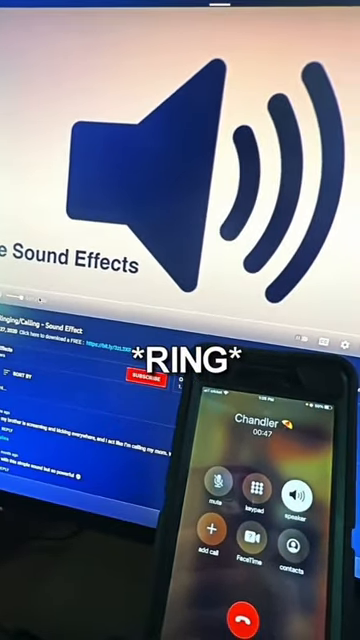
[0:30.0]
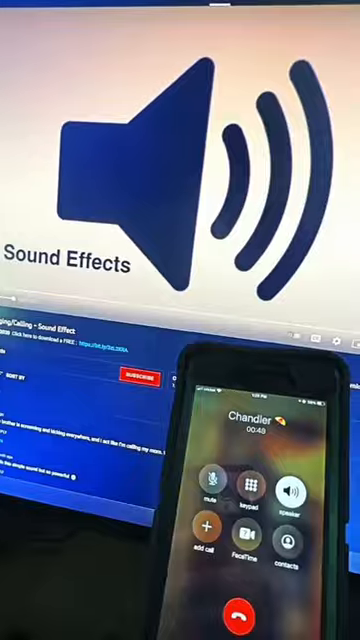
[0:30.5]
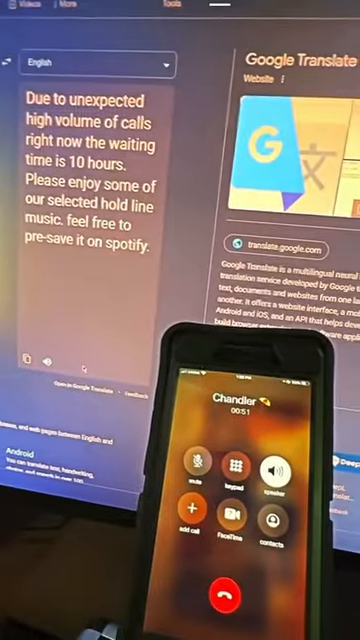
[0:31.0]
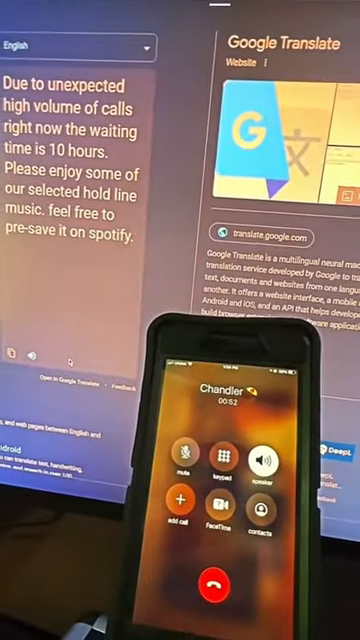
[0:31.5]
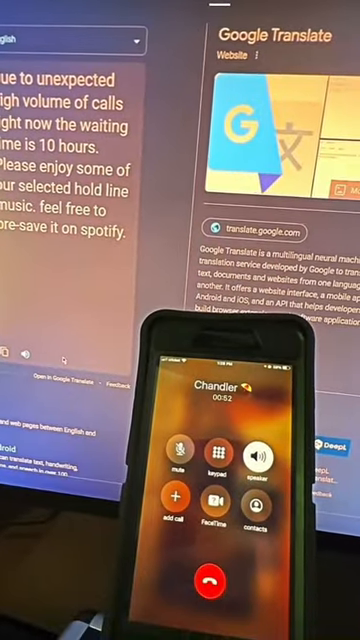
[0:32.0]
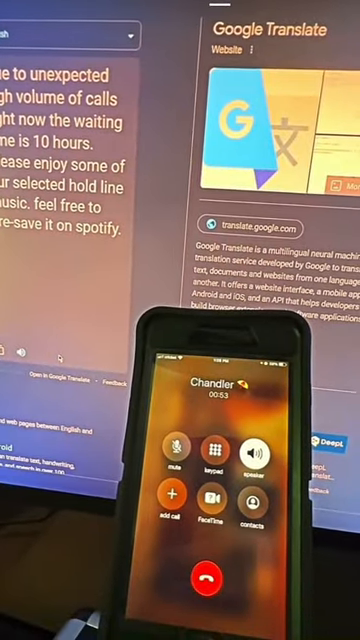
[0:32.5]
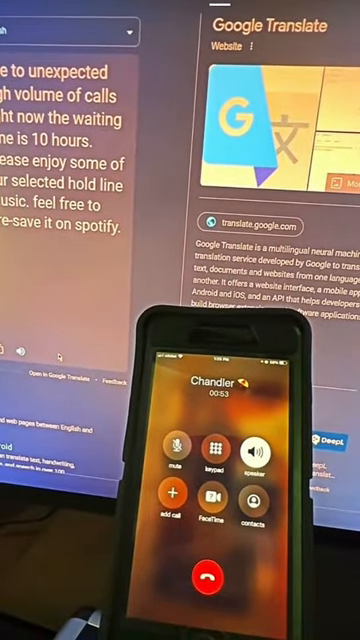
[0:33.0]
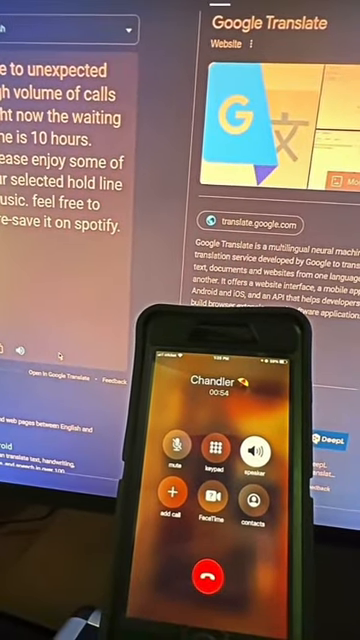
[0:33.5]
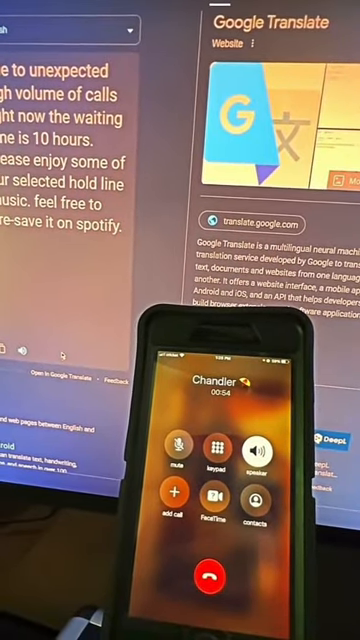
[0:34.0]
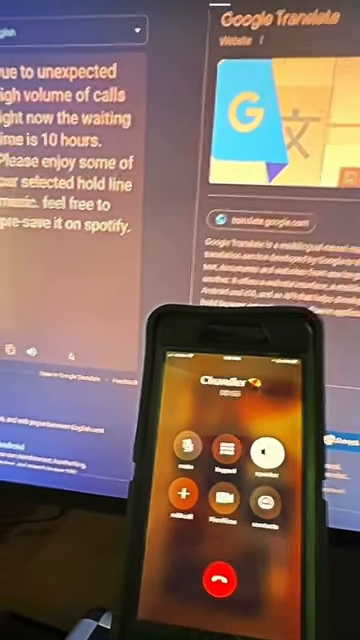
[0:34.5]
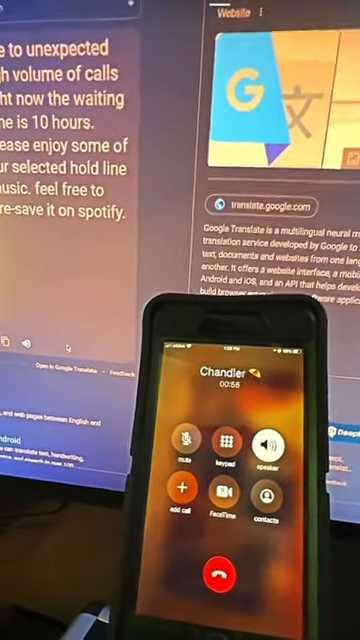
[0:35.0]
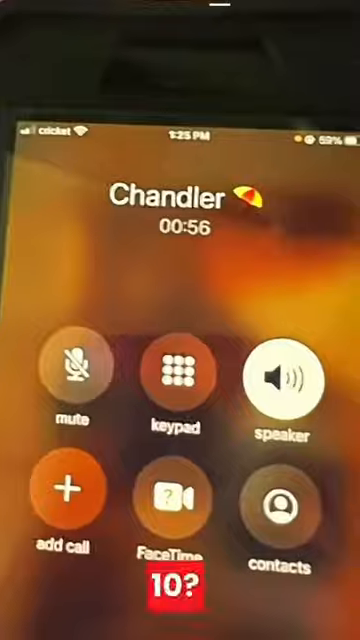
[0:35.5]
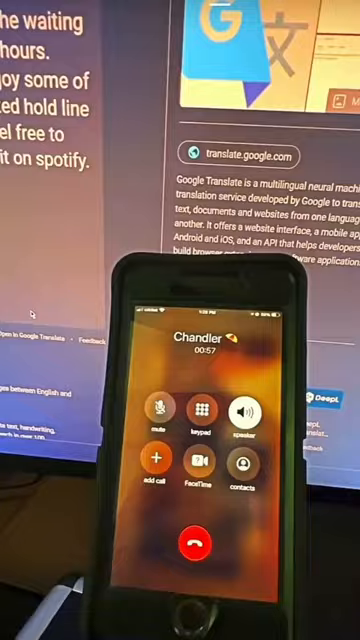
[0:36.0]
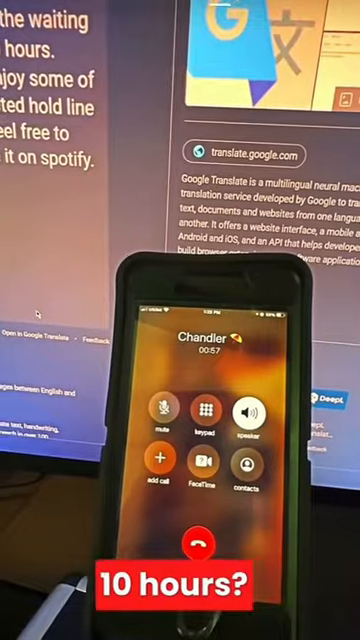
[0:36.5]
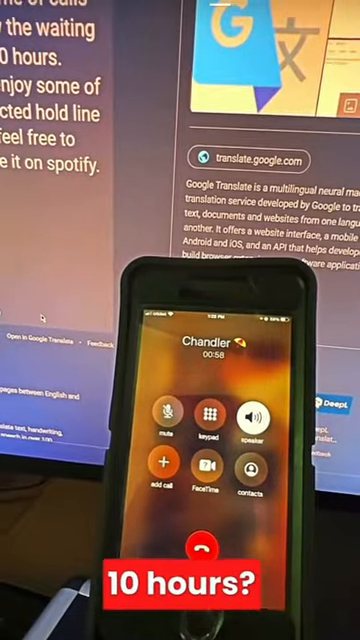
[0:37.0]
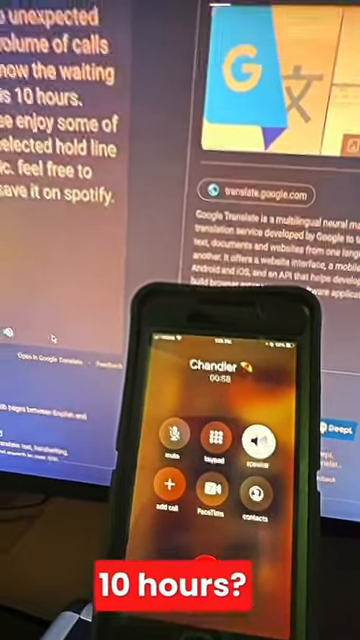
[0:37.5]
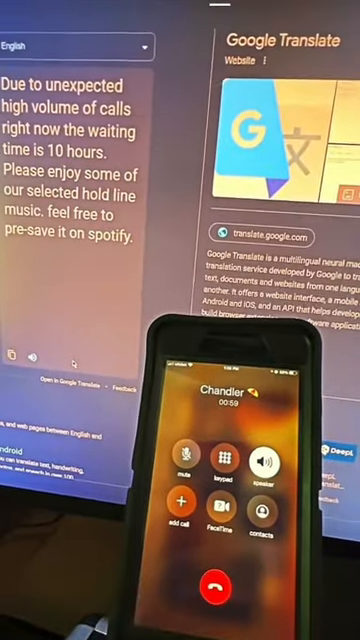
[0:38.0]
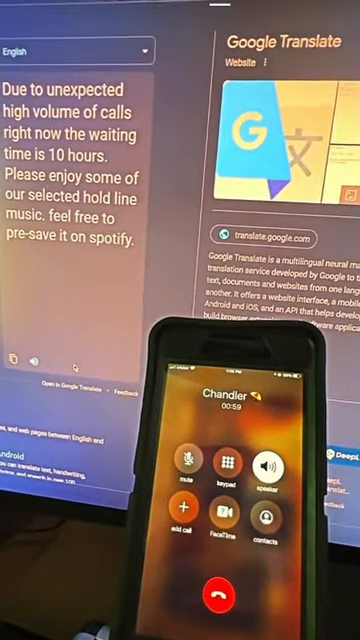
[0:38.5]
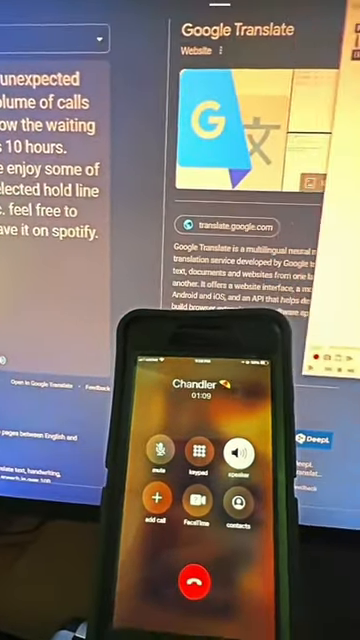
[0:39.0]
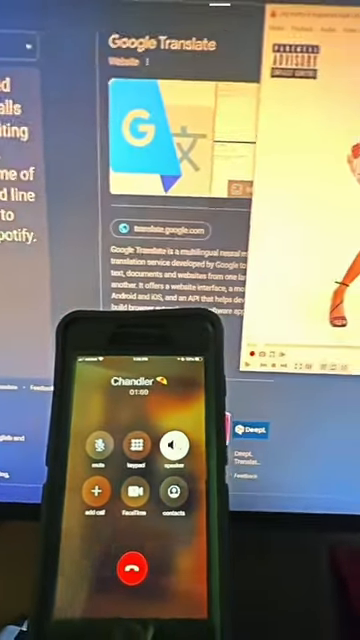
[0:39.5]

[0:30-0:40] A star appears on screen, then the word "RING" in white capital letters, then another star. The view returns to the Google screen, which reads "due to unexpected high volume of calls right now, the waiting time is 10 hours. Please enjoy some of our selected hold line music. Feel free to pre-save it on Spotify." The call appears to be 54 seconds in, and "10 hours?" appears at the bottom of the screen in white on a red background. Then an image with a parental advisory sticker pops up on screen, apparently an album cover, showing a lady sitting on a toilet with her panties down, holding a newspaper.